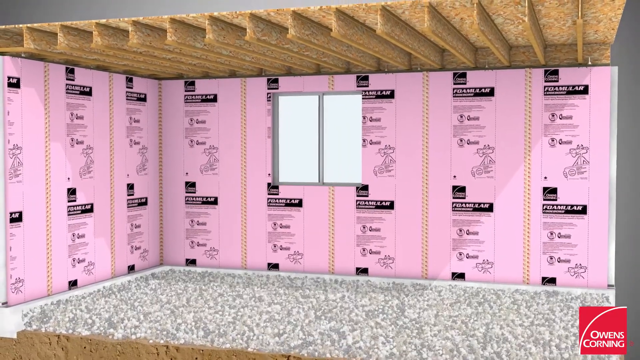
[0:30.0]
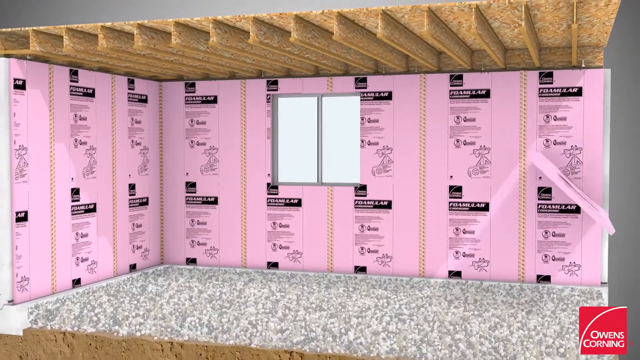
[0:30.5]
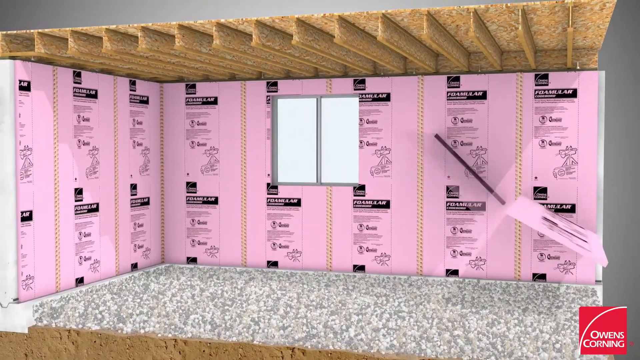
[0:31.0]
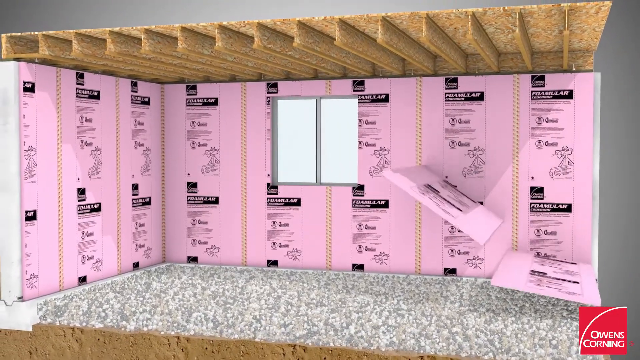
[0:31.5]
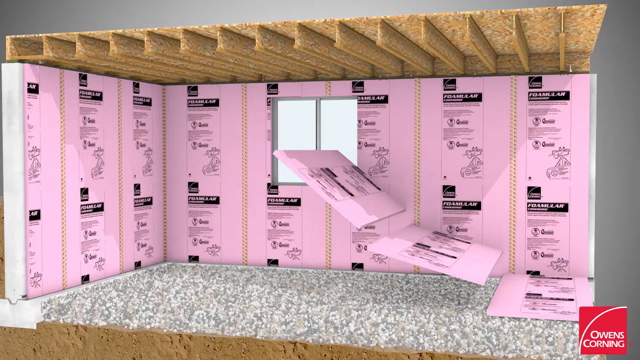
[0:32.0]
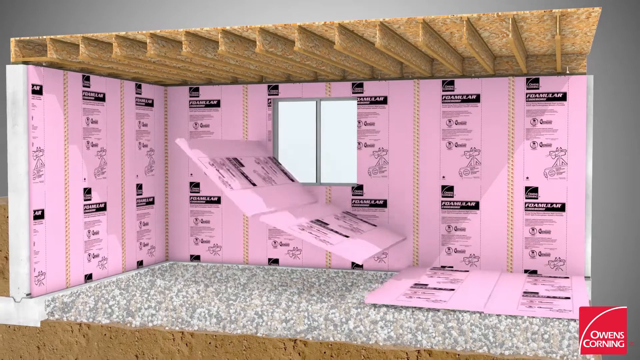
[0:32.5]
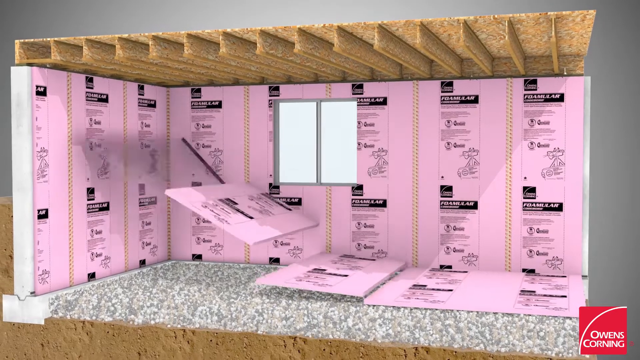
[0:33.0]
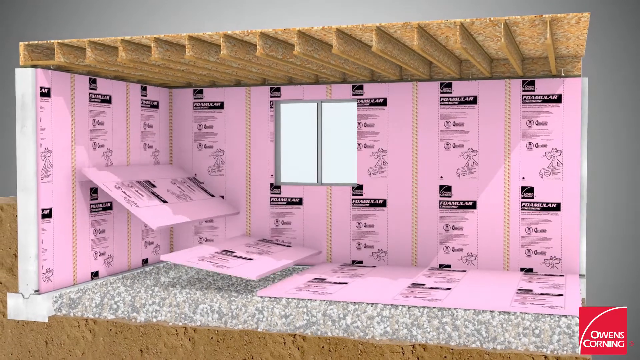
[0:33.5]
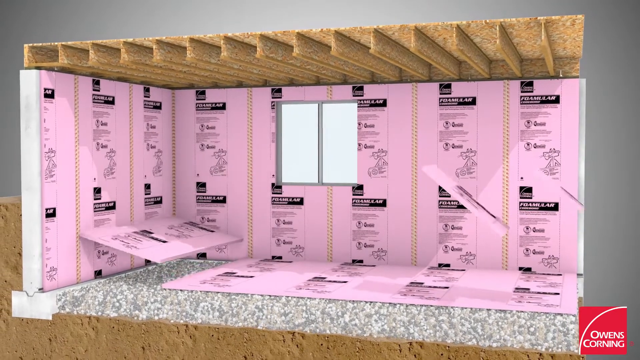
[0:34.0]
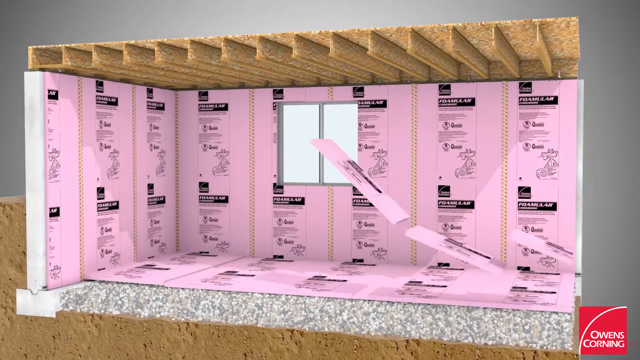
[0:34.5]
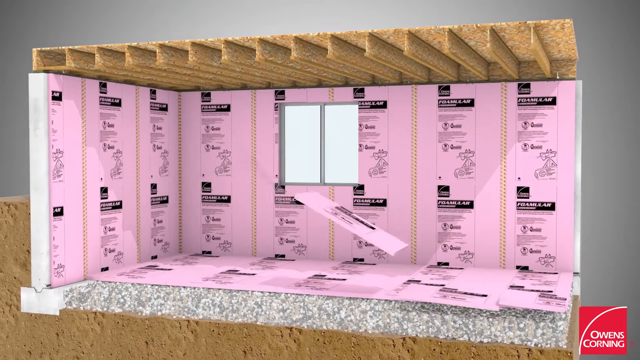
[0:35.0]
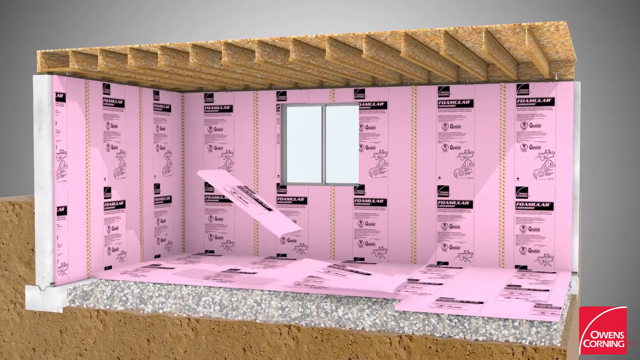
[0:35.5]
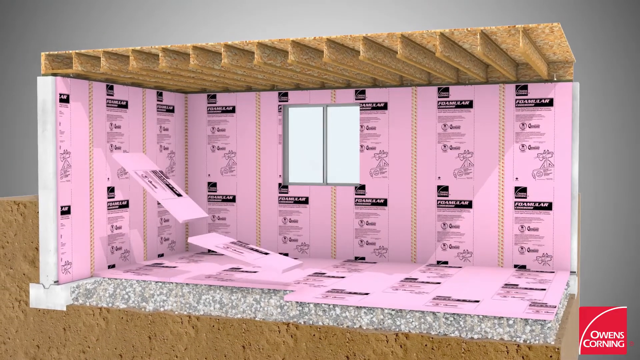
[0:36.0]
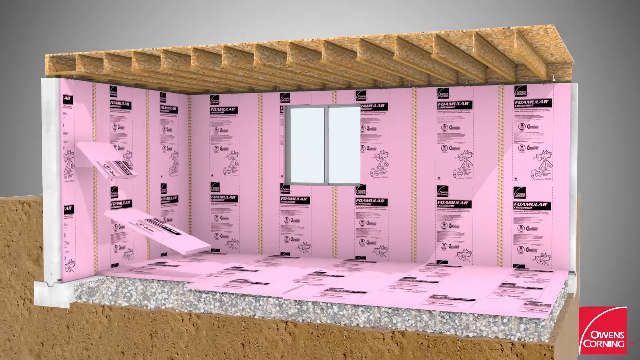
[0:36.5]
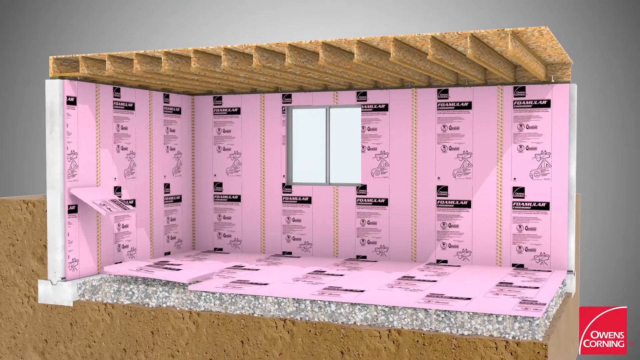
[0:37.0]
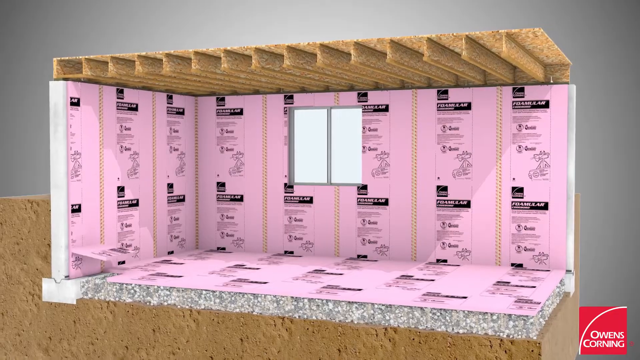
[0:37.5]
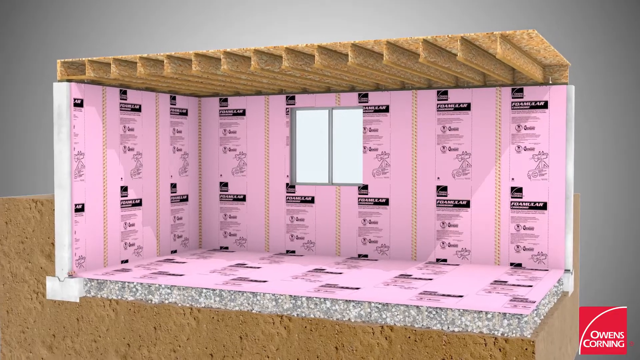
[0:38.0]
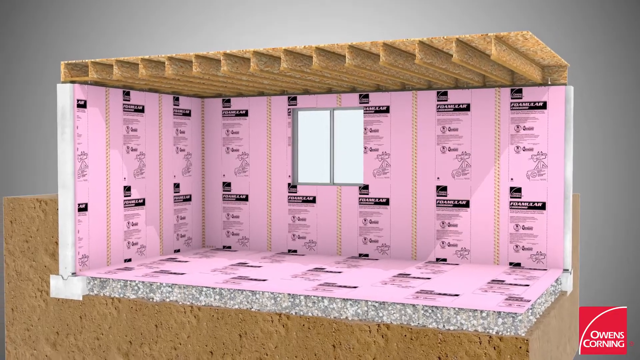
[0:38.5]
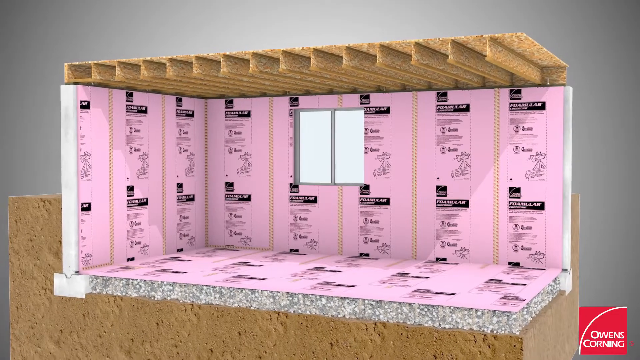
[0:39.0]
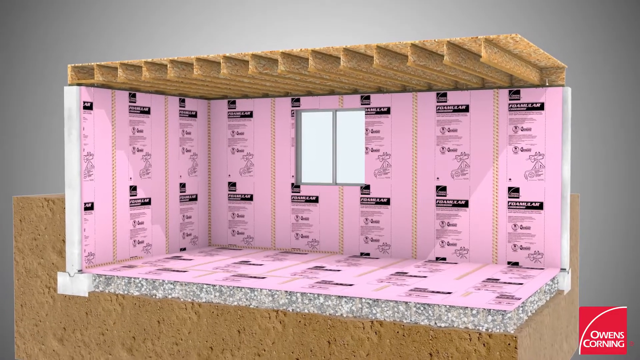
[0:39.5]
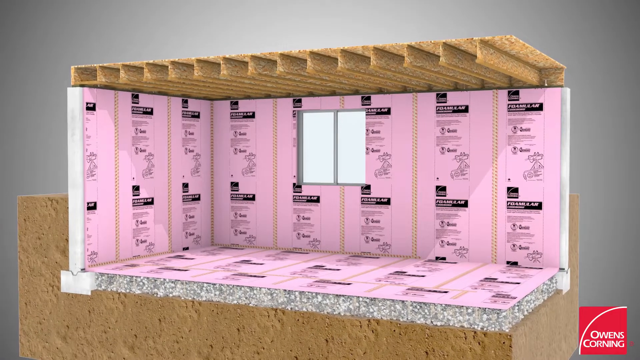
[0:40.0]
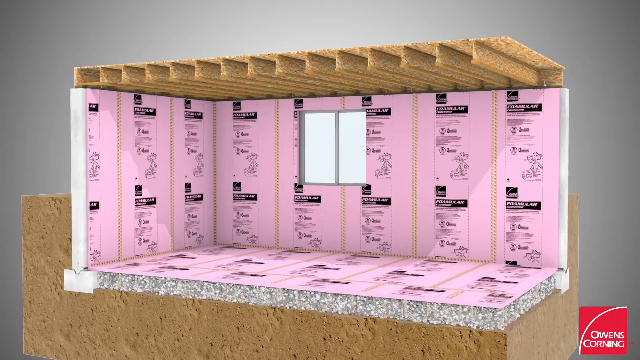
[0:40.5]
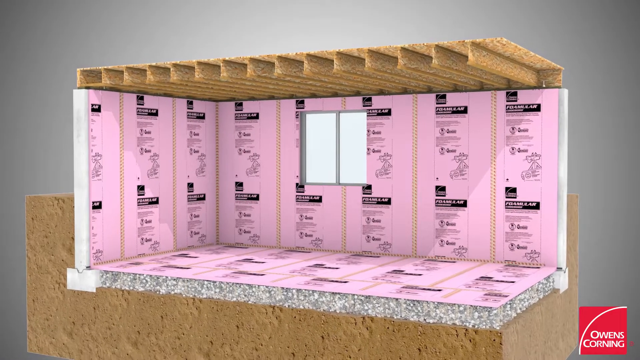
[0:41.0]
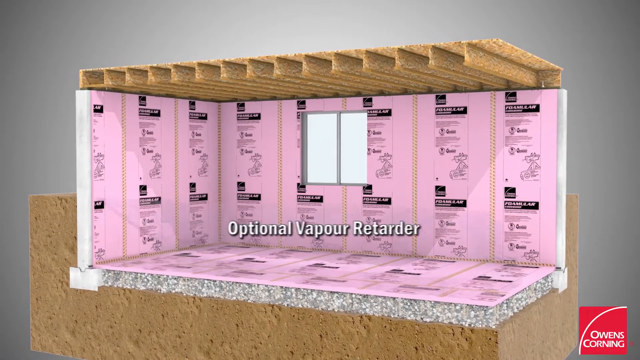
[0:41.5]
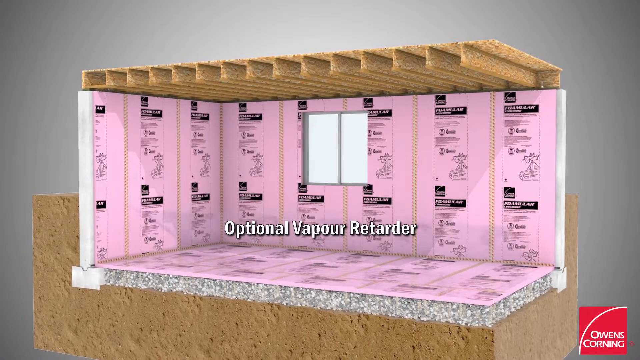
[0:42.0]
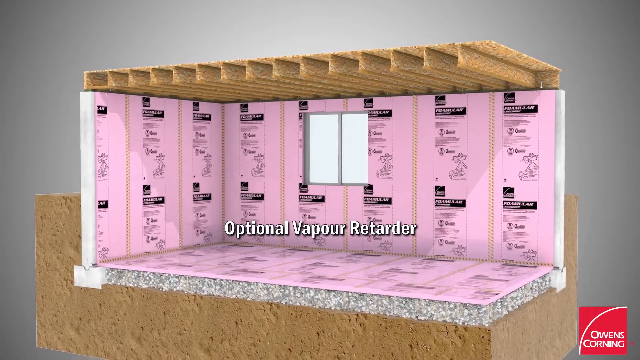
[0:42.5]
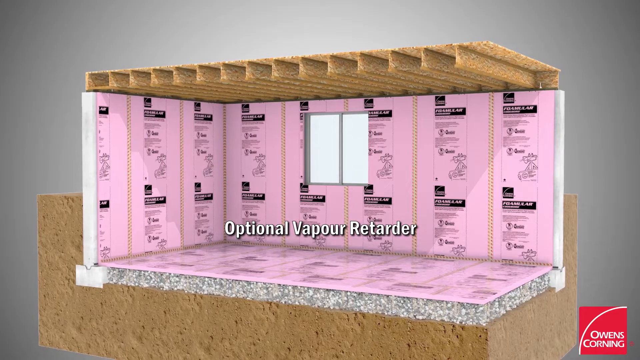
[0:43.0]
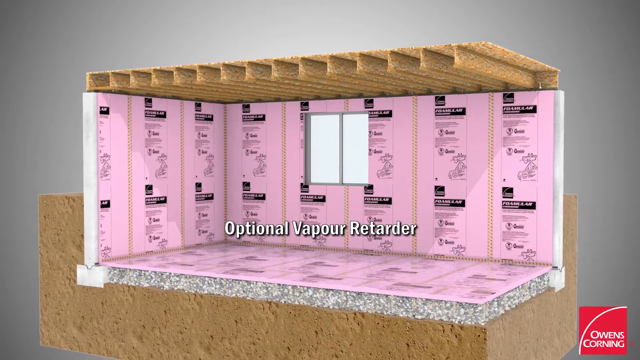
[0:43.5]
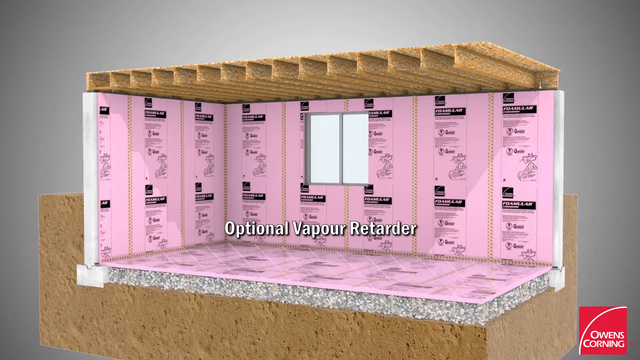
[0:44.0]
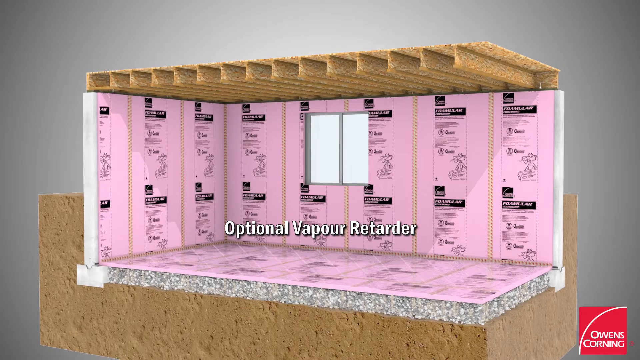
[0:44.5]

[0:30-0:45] A 3D-rendered room interior appears with the text "basement wall." The framing is sort of tan, and plywood and pink slabs of what looks like insulation are put in. Text reads "optional vapor retarder." A floor is put in. "Owens Corning" appears in the bottom right, with the words in white and the logo in red. Pink sheets of insulation go into the room between the beams, a membrane is put over the top, and nail guns nail it to the wall; it is a moisture barrier, and the nail guns show where the membrane gets nailed. The view zooms out as the ceiling goes in and the room is finished, with a window and an outlet. Beams are then put up and overlaid for a different application.